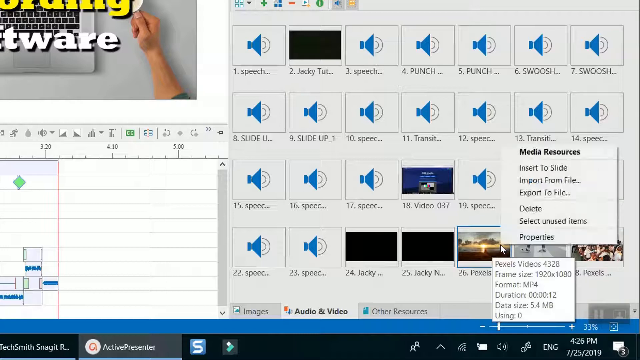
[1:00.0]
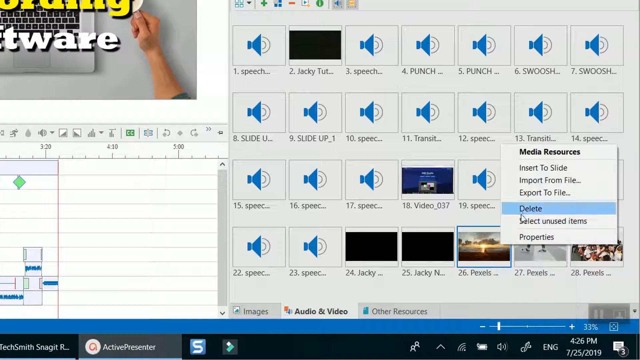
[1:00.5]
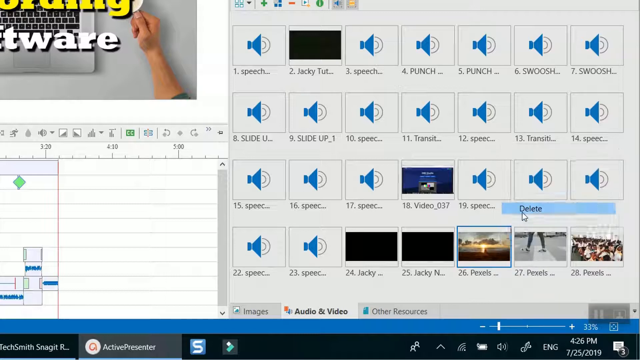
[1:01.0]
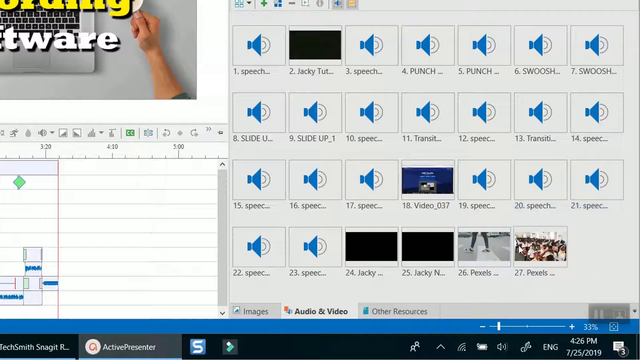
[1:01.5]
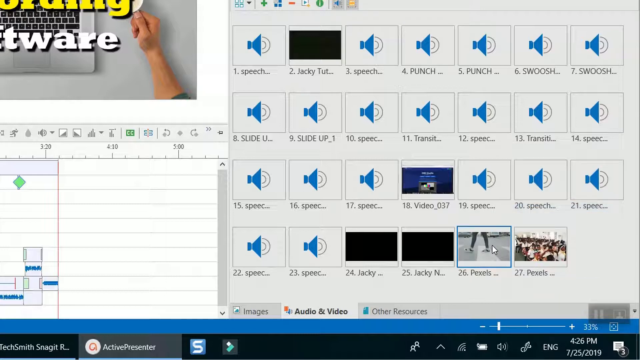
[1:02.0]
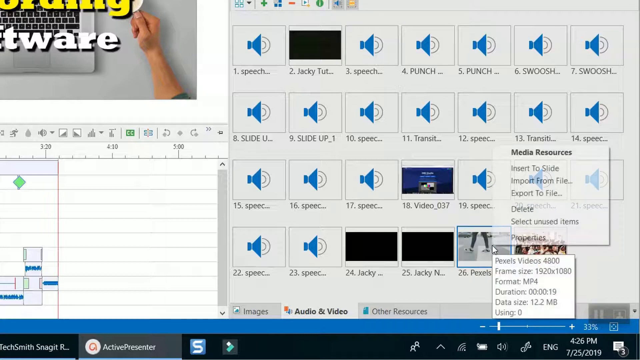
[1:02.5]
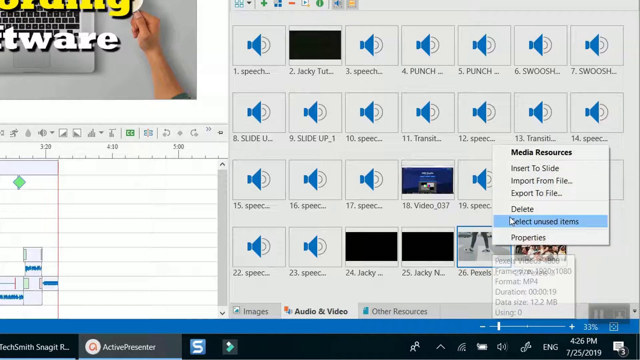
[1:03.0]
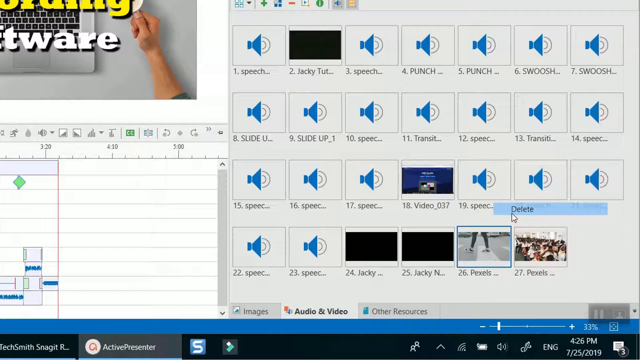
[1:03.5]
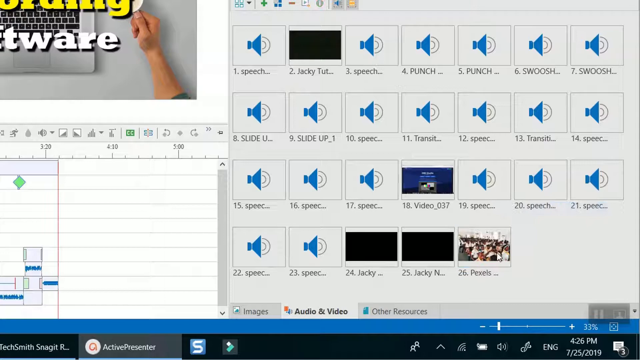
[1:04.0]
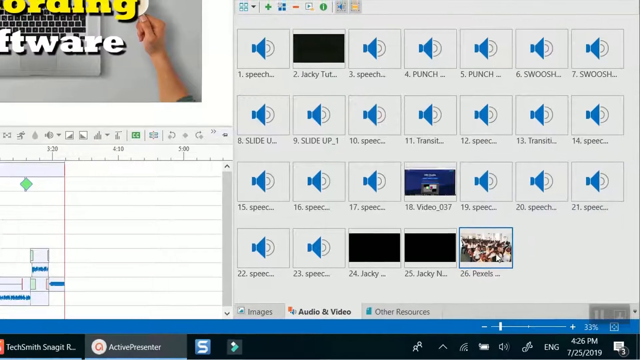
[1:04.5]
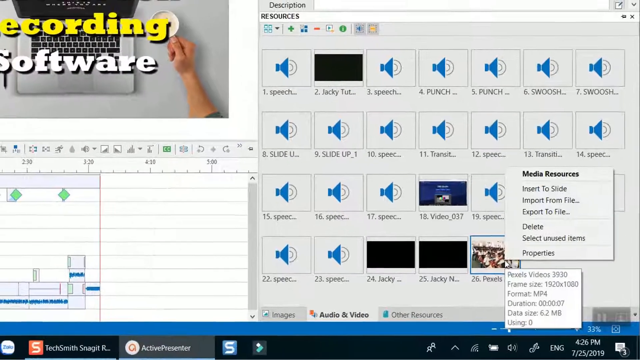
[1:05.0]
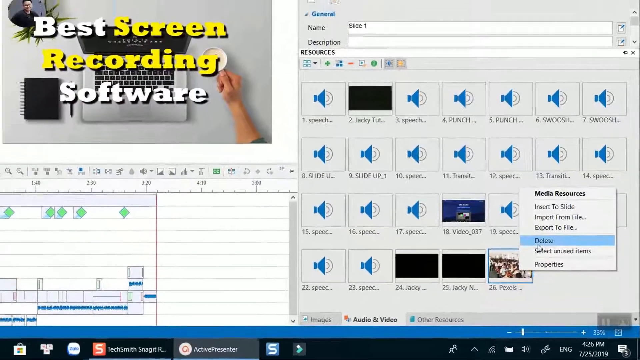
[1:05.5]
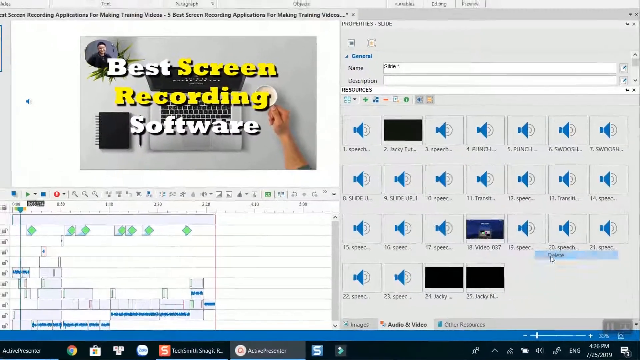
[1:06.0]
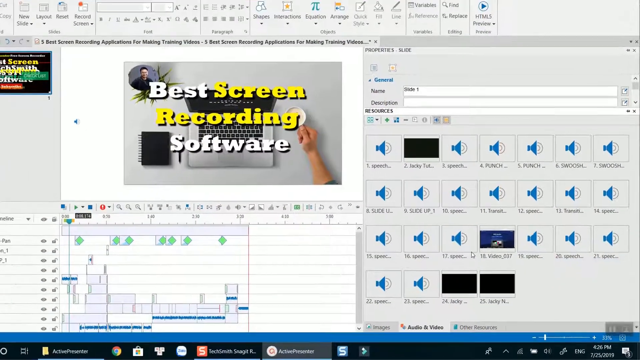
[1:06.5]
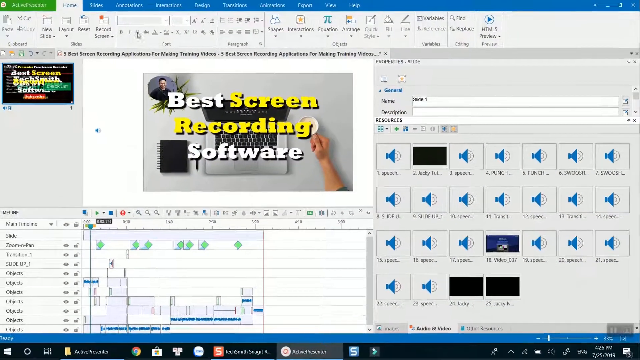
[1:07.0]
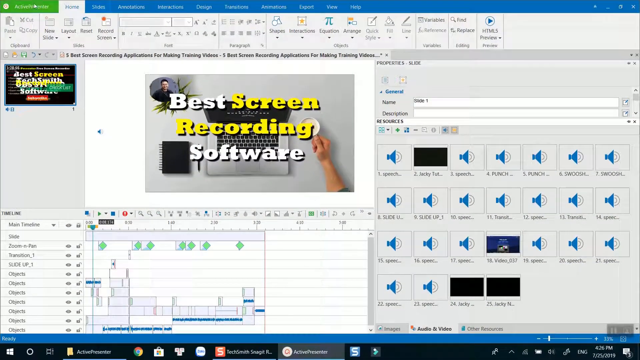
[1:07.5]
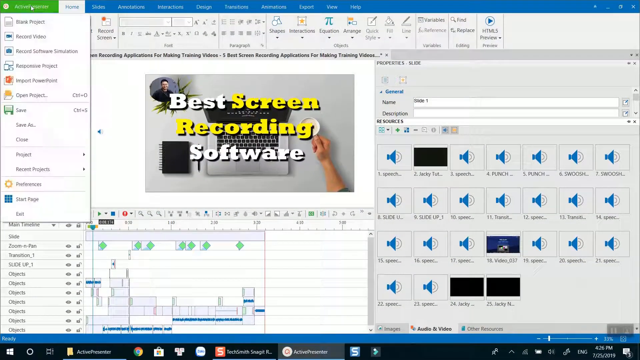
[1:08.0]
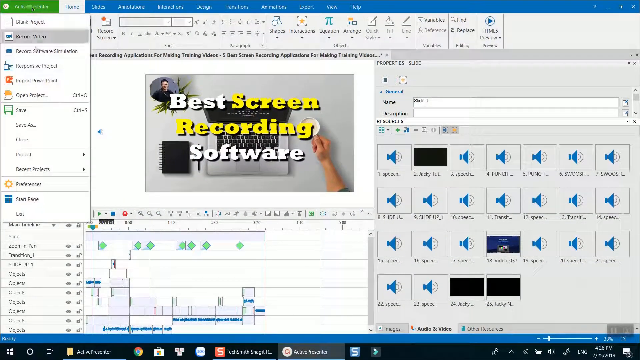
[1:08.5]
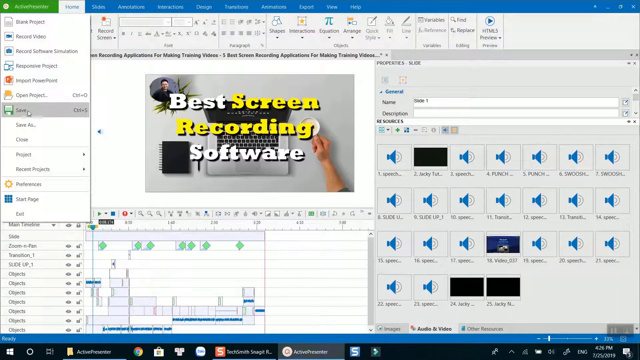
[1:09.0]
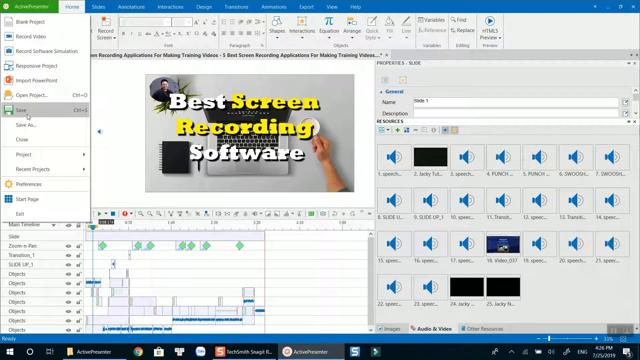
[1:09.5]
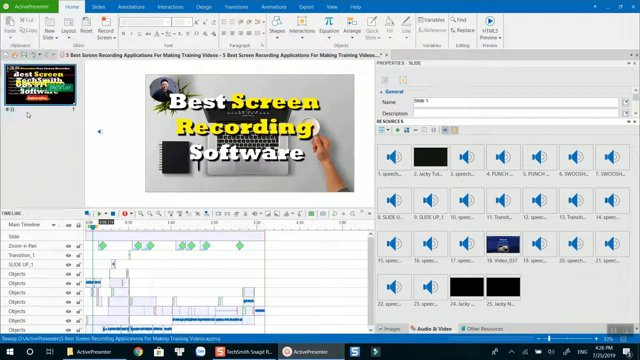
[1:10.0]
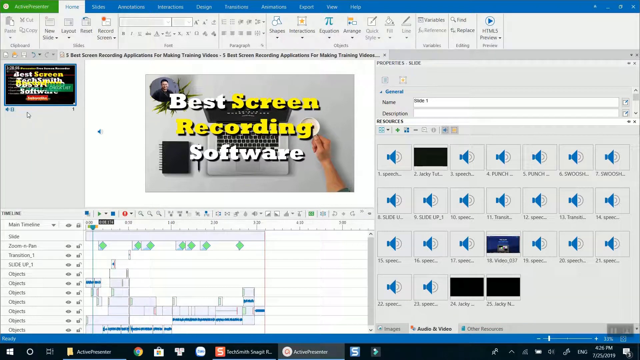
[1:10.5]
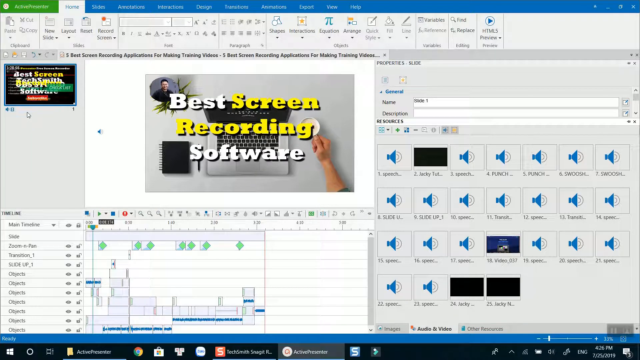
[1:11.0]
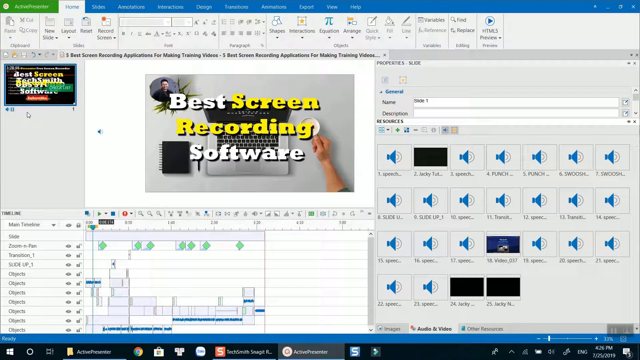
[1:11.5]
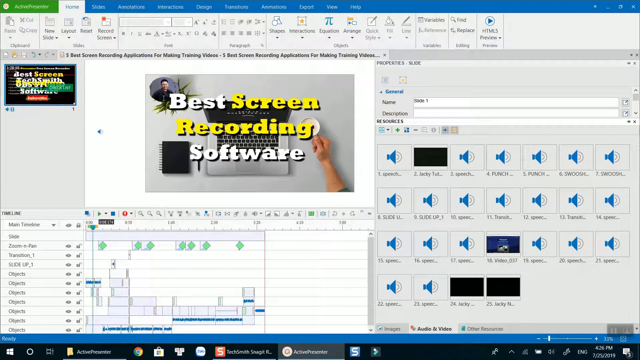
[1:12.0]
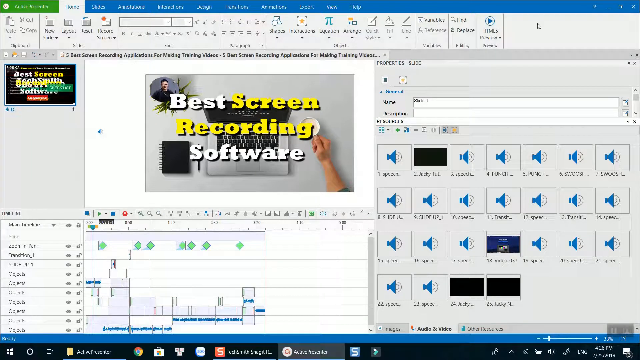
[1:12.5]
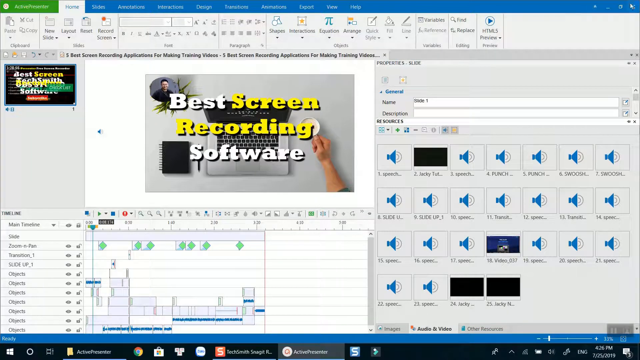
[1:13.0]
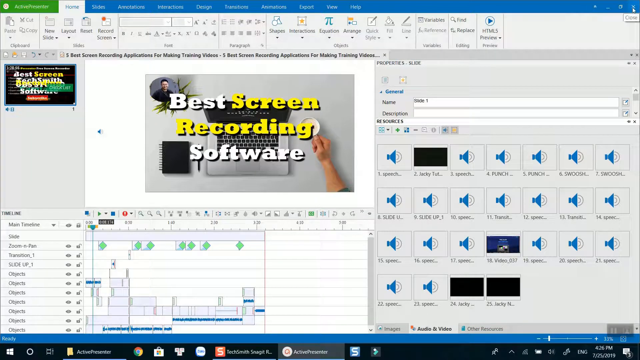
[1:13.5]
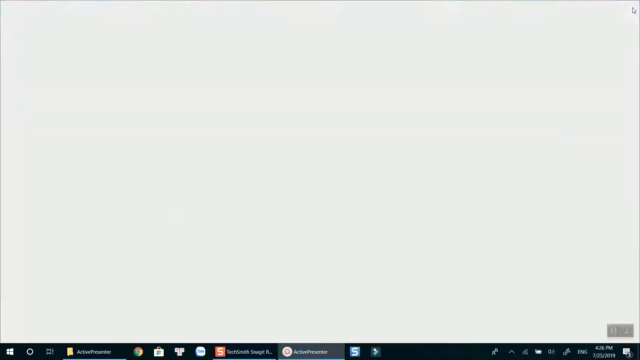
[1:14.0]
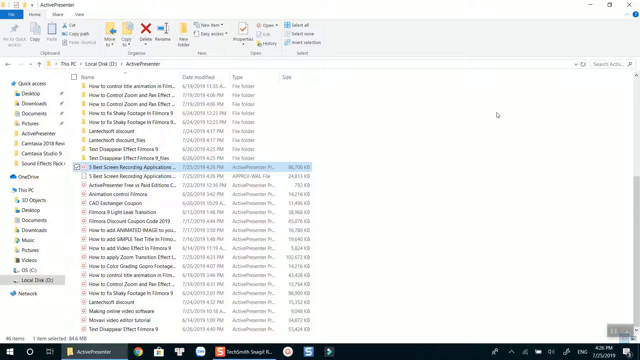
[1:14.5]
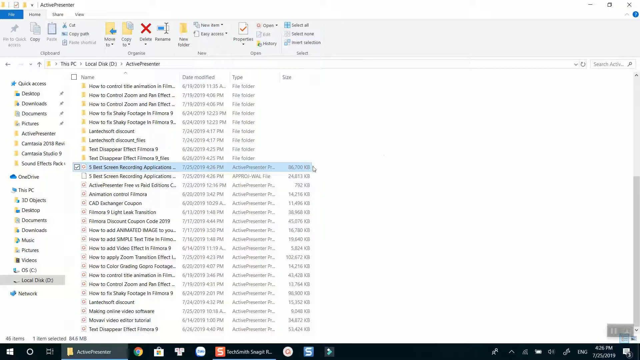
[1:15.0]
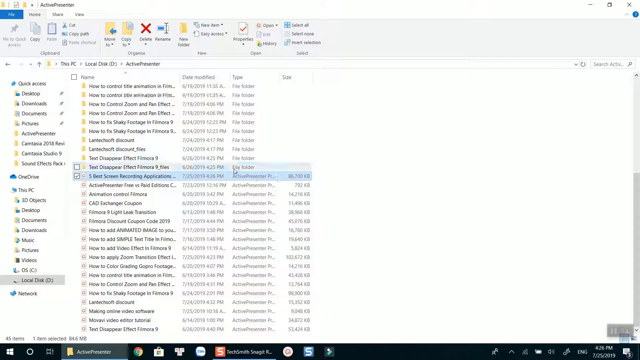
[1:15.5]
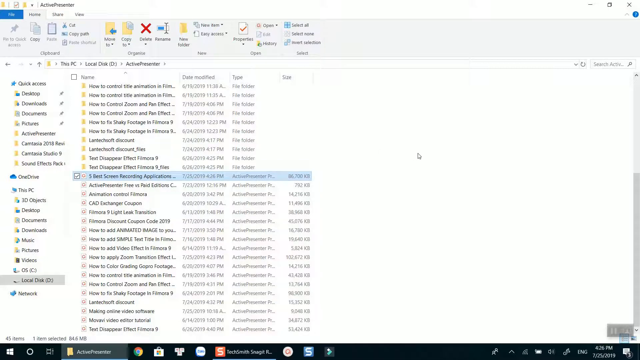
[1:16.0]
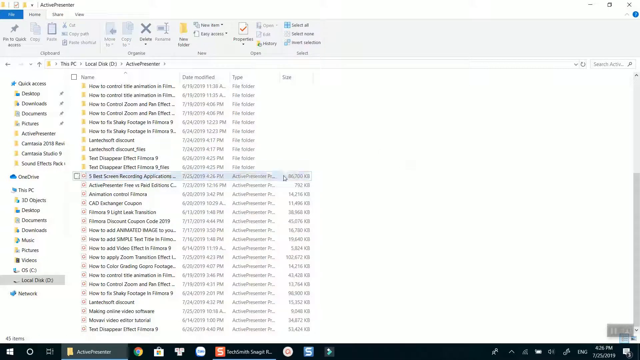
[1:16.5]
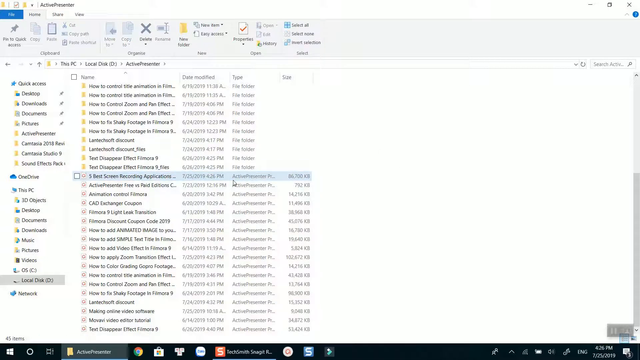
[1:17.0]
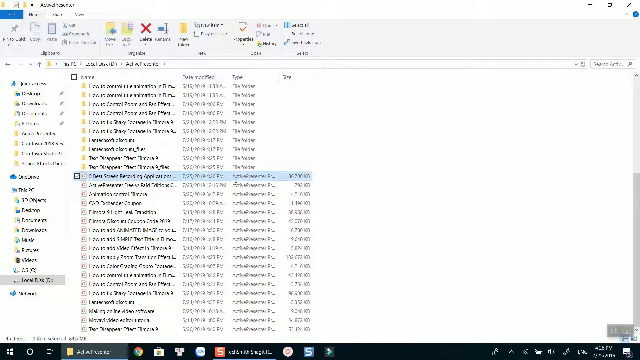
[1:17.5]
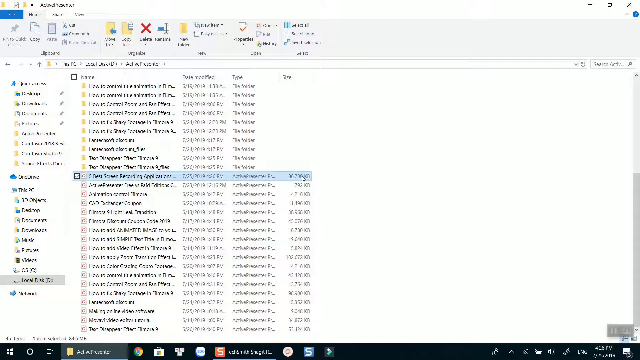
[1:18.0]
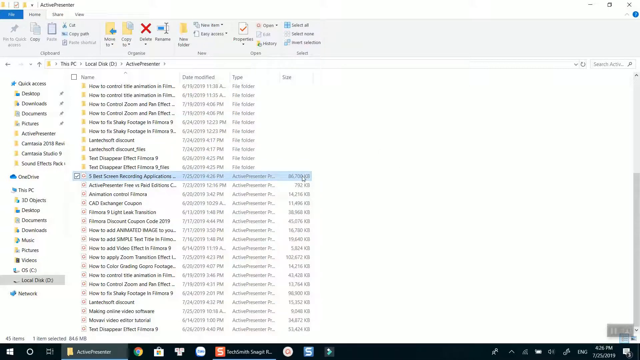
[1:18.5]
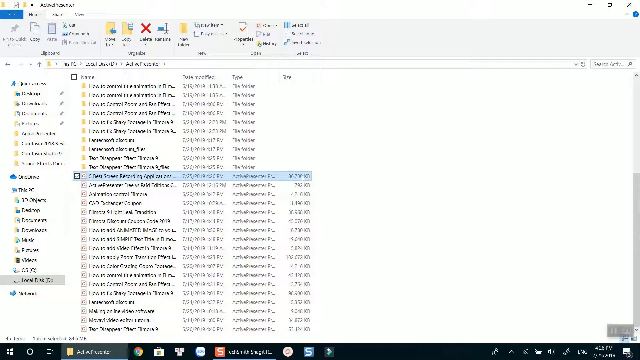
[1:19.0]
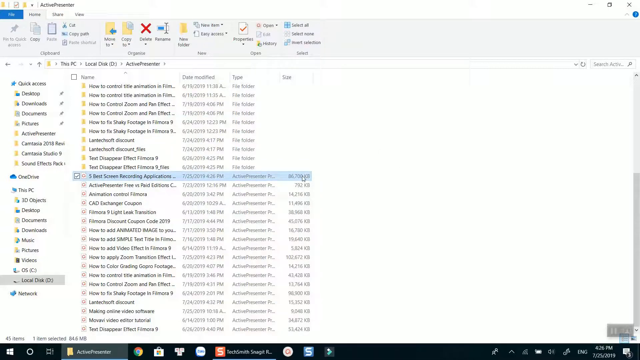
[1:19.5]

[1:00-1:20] The focus is now on the files panel, where videos and audio are selected for use in the edit. Most of the files are audio files, each represented by what looks like a megaphone-shaped blue icon with two half circles coming out of the front to indicate sound. The list reads: number one "speech"; two, apparently a video clip, "Jackie Tut"; three "speech"; four "punch"; five "punch"; six "swoosh"; seven "swoosh"; nine "slide up_1"; ten "speec"; eleven "transit"; twelve "speec"; then "transiti"; fourteen through seventeen "speec"; eighteen "video_037"; nineteen "speec"; twenty "speech"; twenty-one "speak"; and more. Two video clips near the end are "Jackie" and "Jackie N," and the 26th says "Pexels." The person then clicks on Active Presenter at the top left and clicks Save.